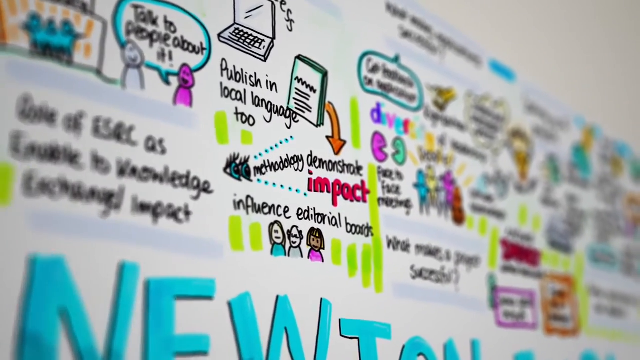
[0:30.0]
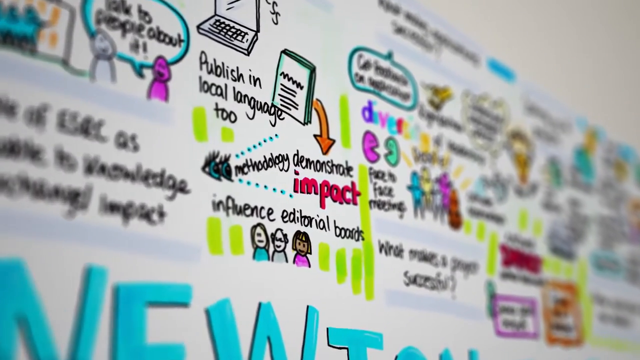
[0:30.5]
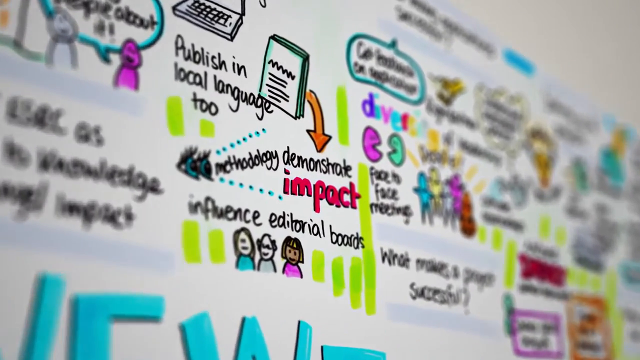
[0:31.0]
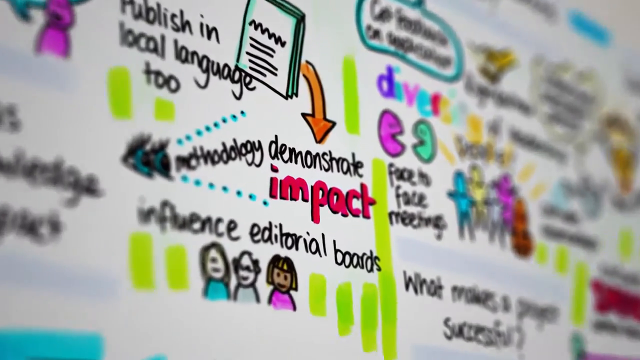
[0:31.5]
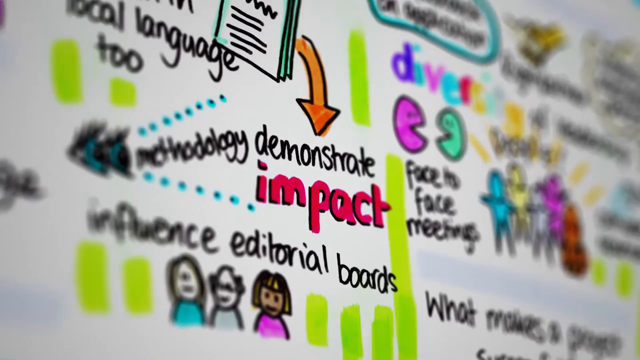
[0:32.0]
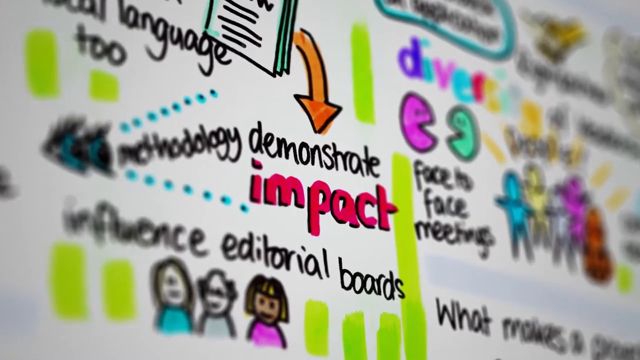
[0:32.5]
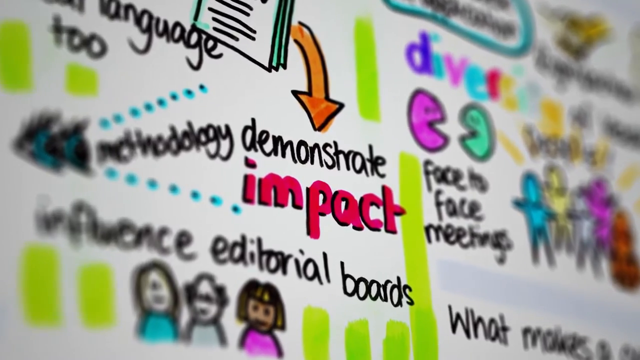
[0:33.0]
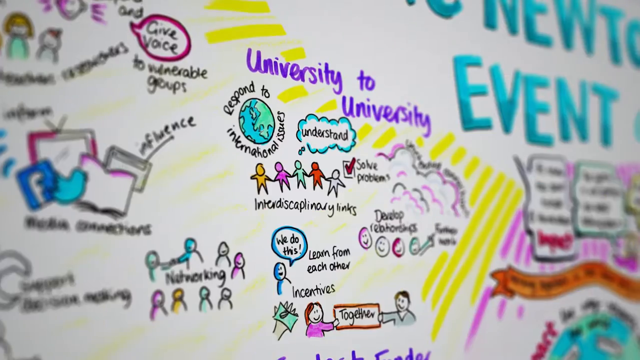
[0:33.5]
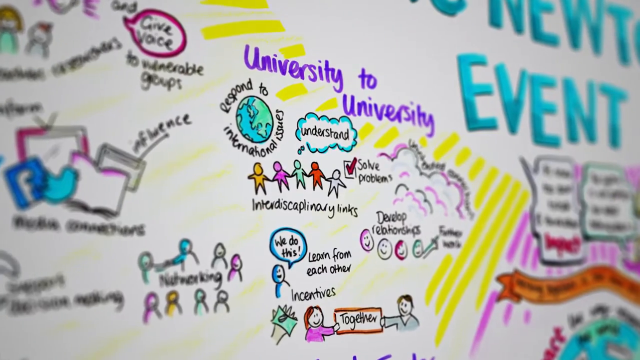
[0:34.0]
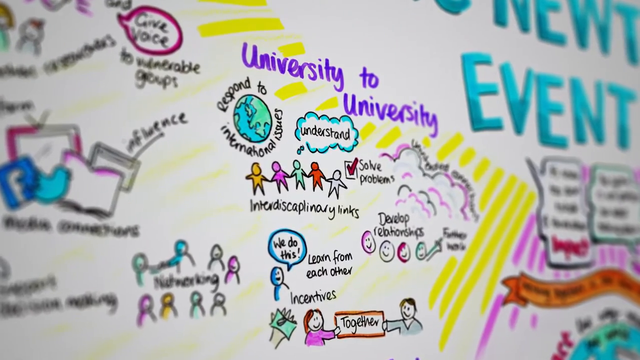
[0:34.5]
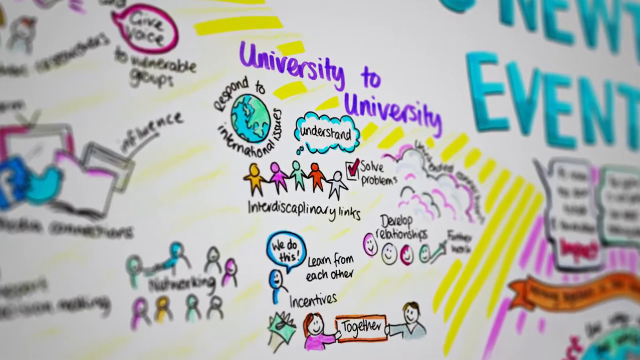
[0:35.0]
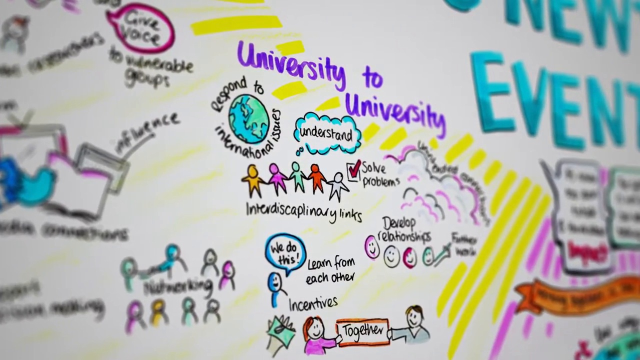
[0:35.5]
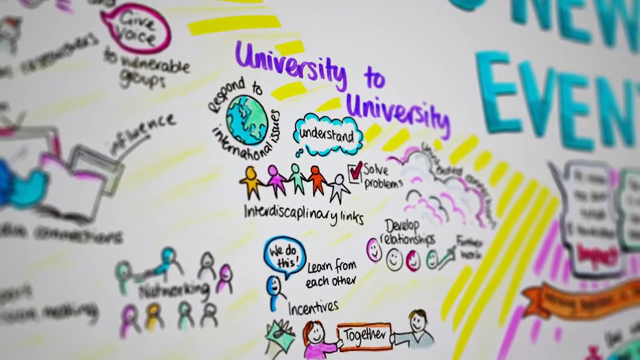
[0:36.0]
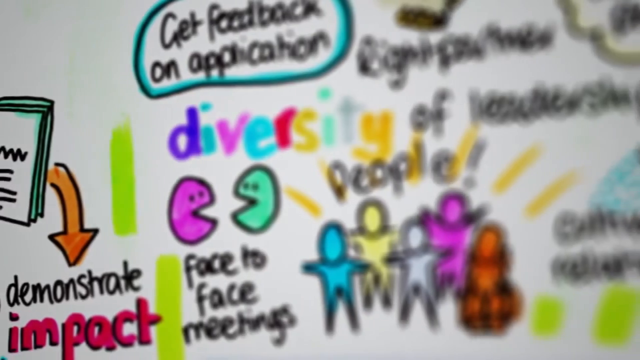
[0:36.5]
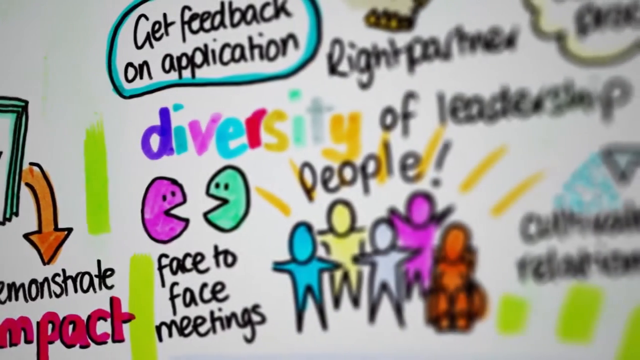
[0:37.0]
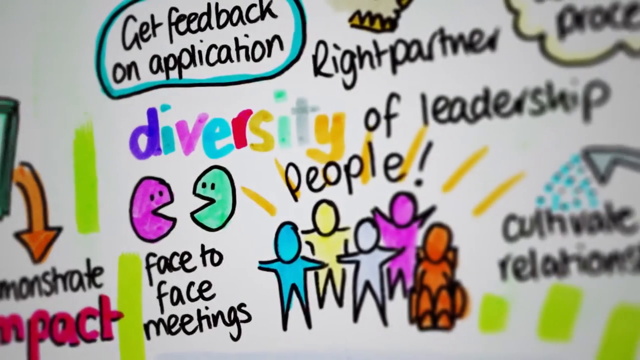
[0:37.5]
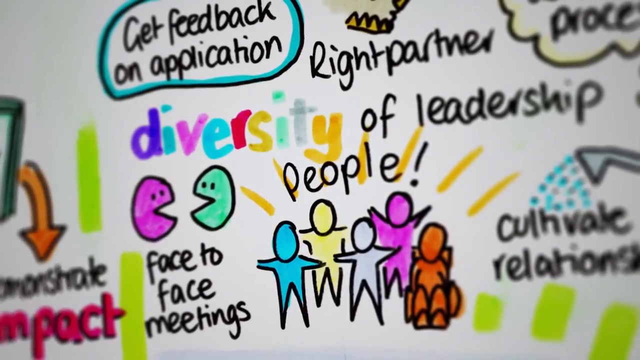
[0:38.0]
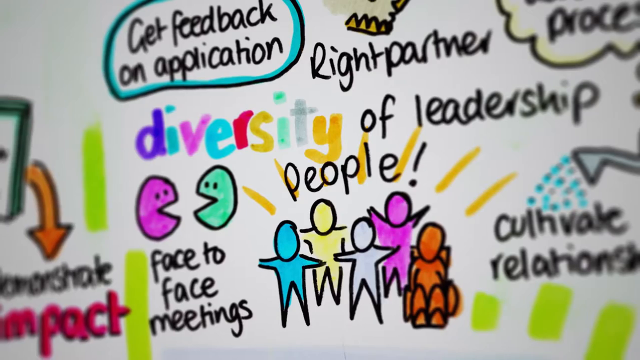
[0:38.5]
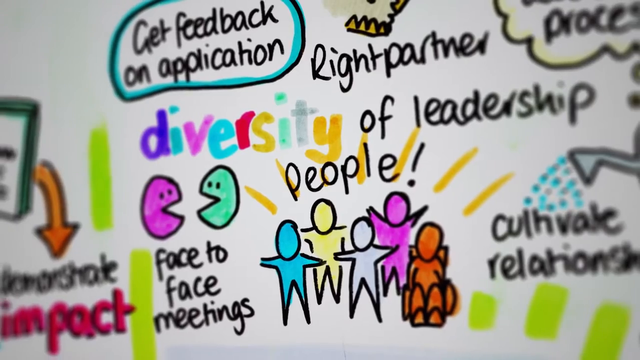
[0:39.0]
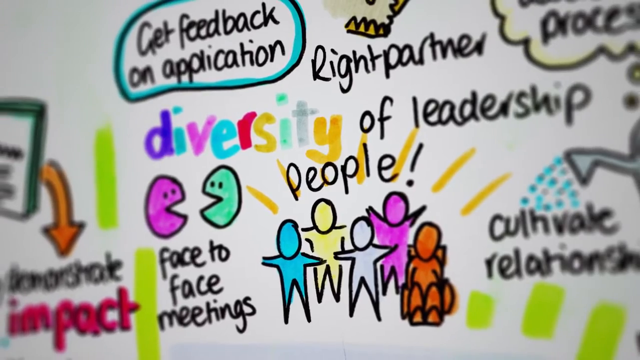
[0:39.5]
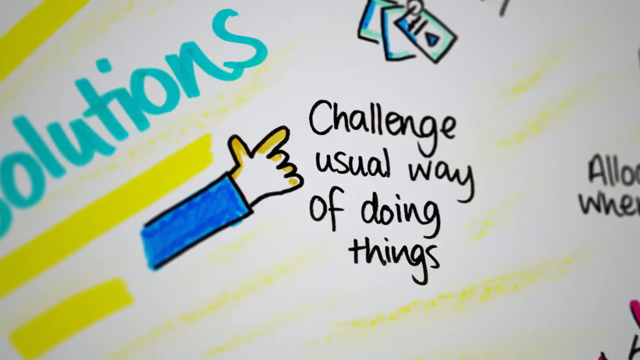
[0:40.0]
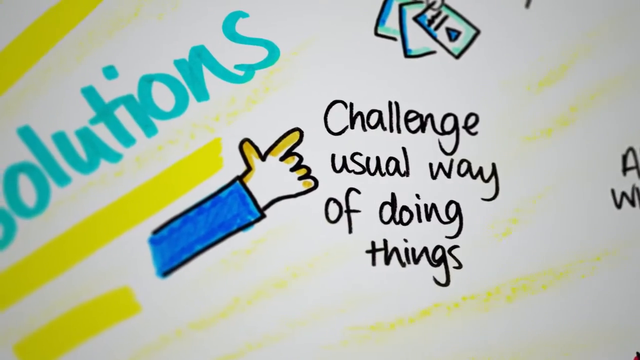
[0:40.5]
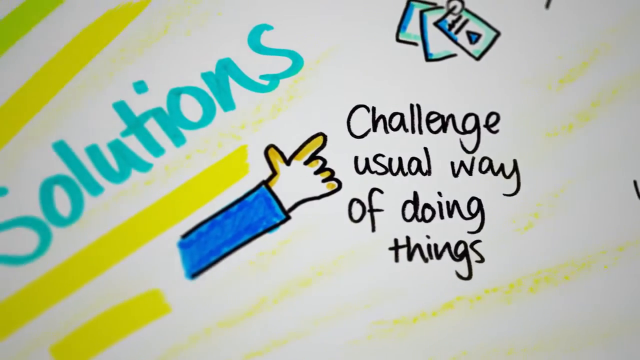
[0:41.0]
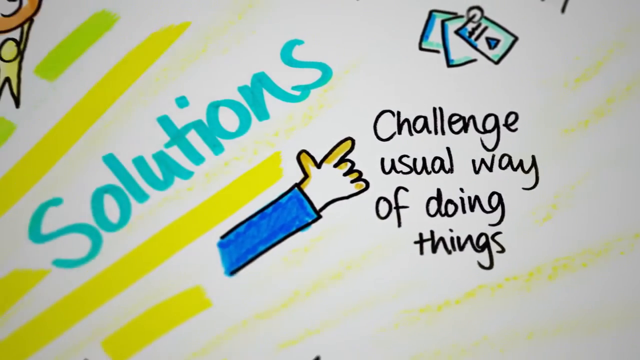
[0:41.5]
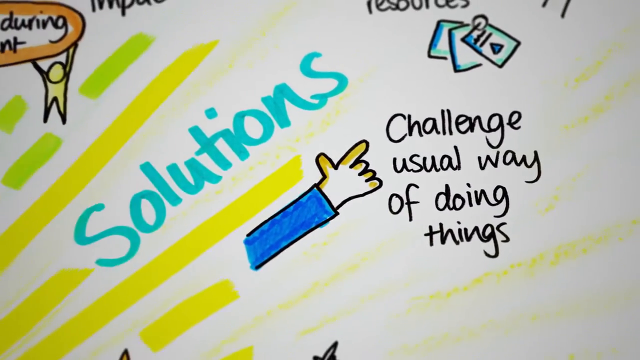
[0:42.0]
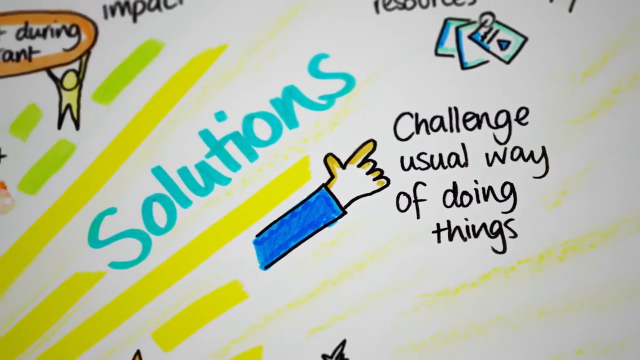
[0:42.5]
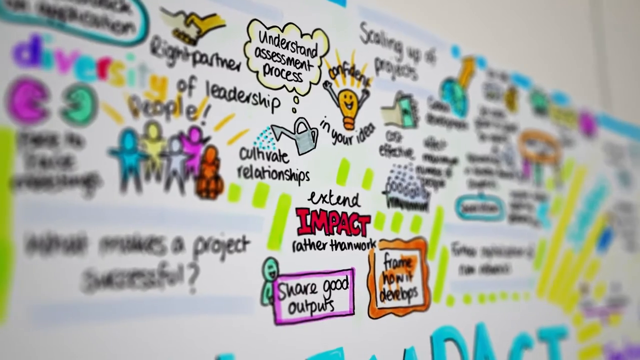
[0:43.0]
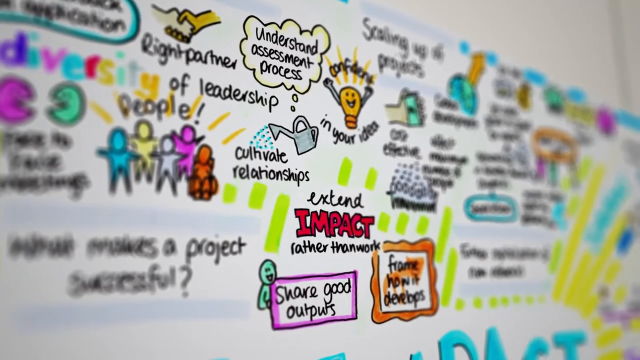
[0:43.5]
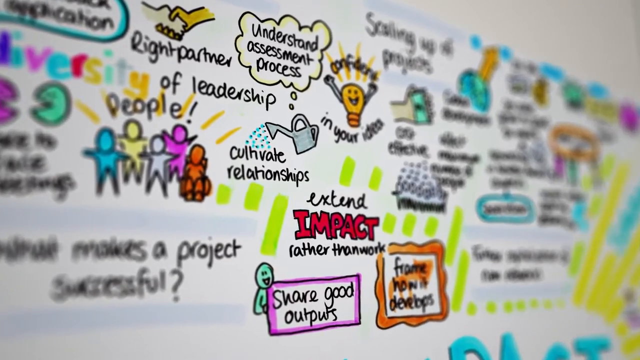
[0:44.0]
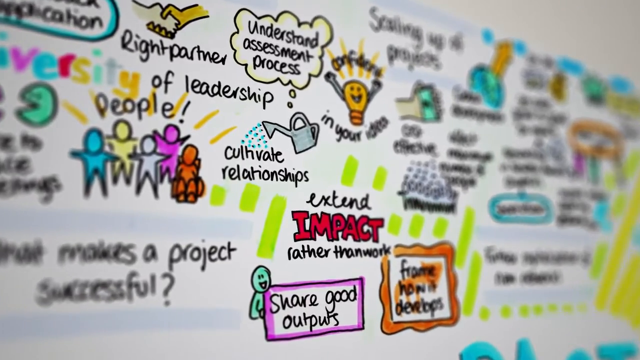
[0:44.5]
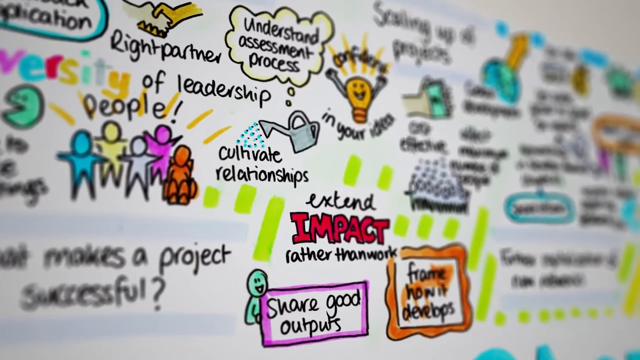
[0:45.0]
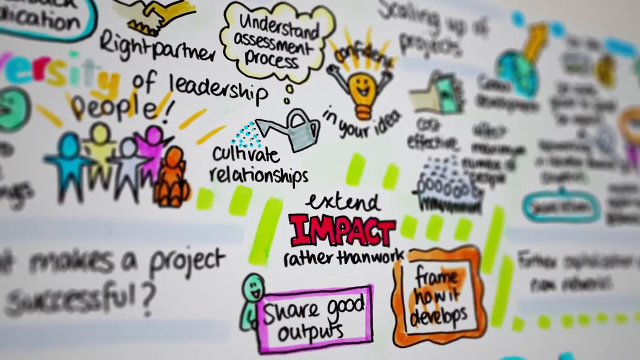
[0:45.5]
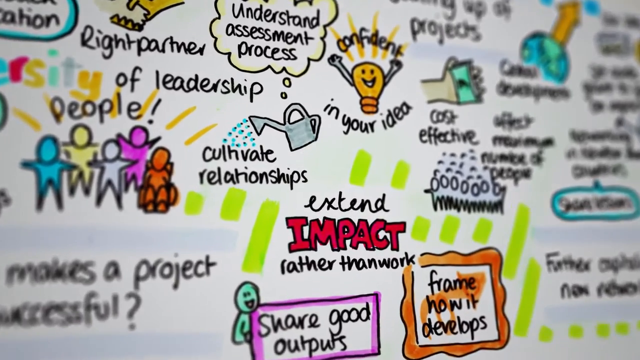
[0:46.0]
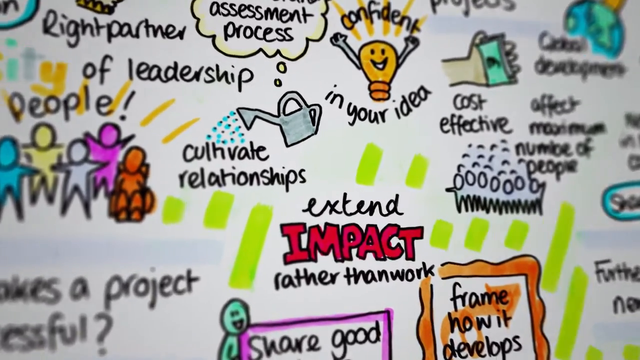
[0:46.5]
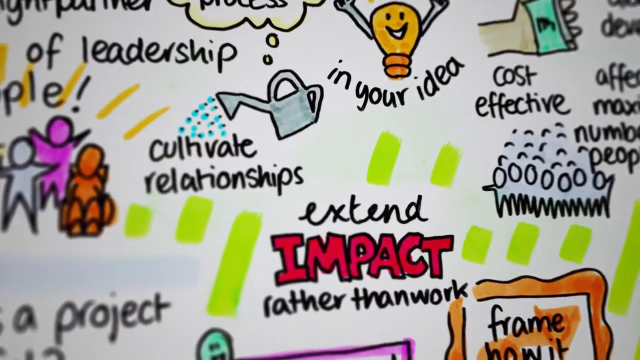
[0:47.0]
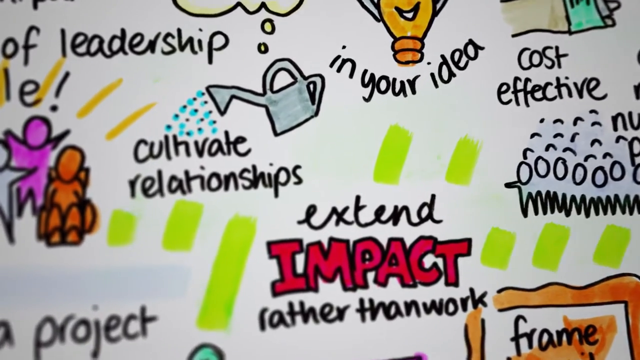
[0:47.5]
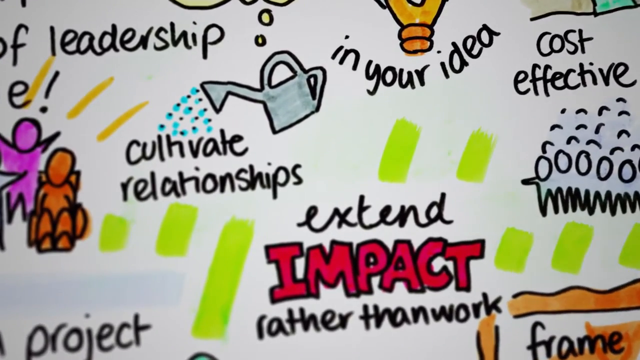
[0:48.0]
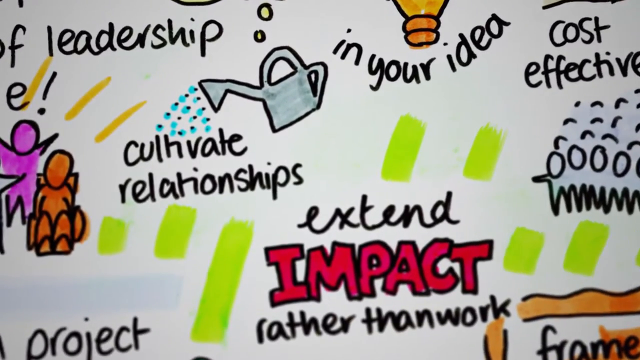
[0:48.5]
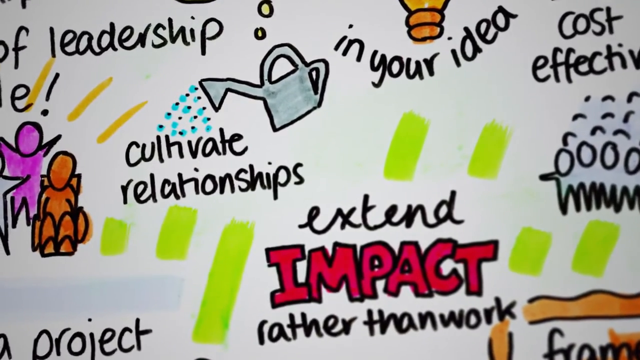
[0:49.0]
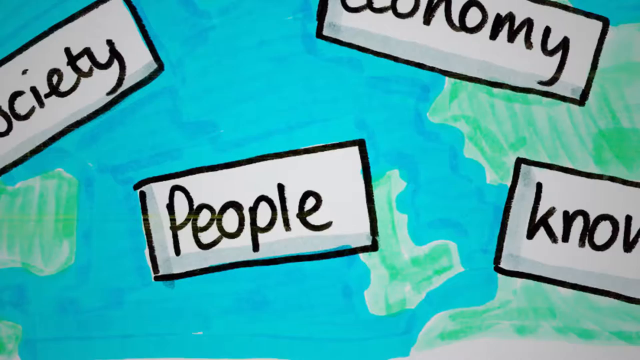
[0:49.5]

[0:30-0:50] A slowed-down zoom moves onto the whiteboard, specifically onto a little picture of sheets with a line pointing toward the words "demonstrate impact," which are highlighted in different colors. The camera then zooms onto the words "university to university," which have little doodles beneath them; one is of the planet Earth, and beneath that are little colorful doodles of people. Next the camera zooms onto the words "diversity of leadership people," also highlighted in different colors. It then zooms onto a part that says "solutions, challenge, usual way of doing things," with a little doodle of a right hand pointing toward the text. A whole view of the colorful whiteboard follows, with more doodles between the text, such as a light bulb, little people, and a watering can. Finally the camera zooms onto text that reads "extend impact rather than work."